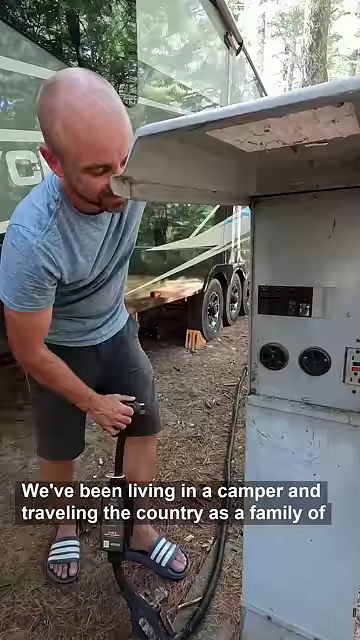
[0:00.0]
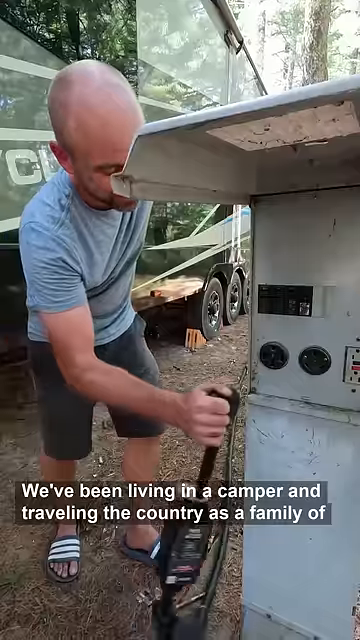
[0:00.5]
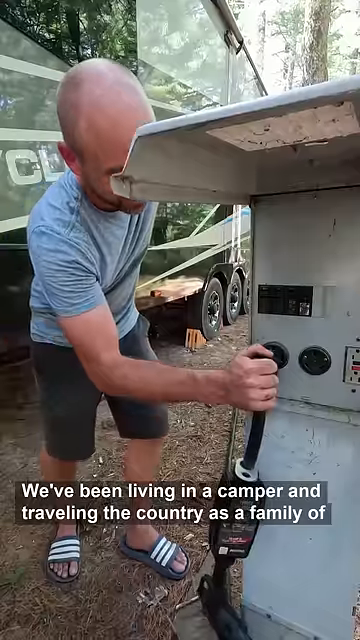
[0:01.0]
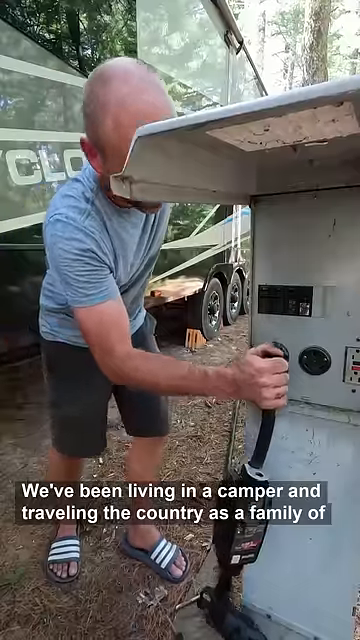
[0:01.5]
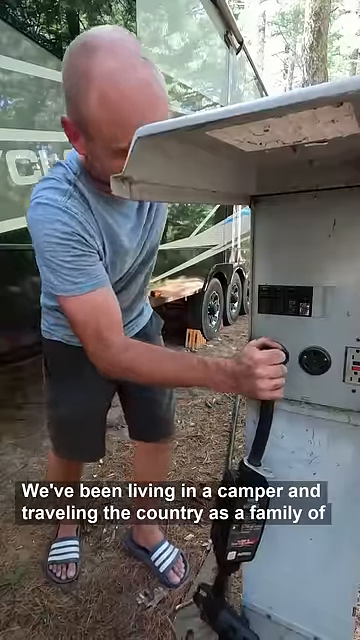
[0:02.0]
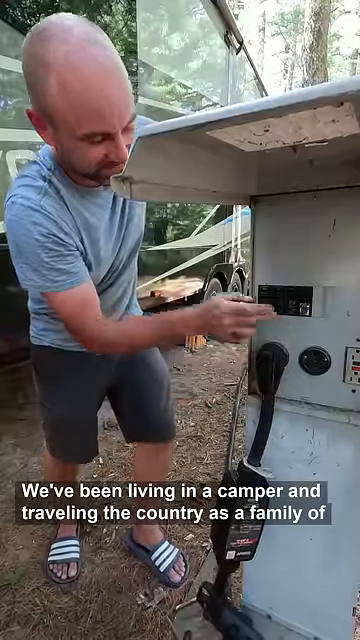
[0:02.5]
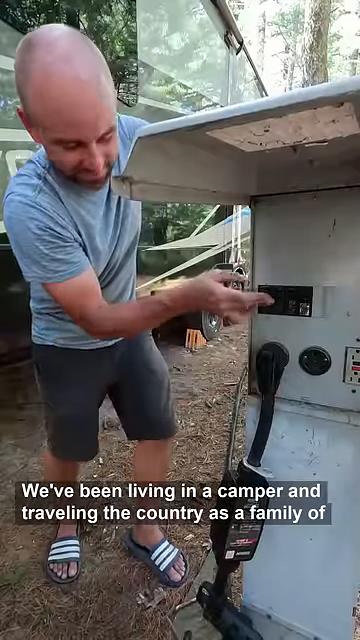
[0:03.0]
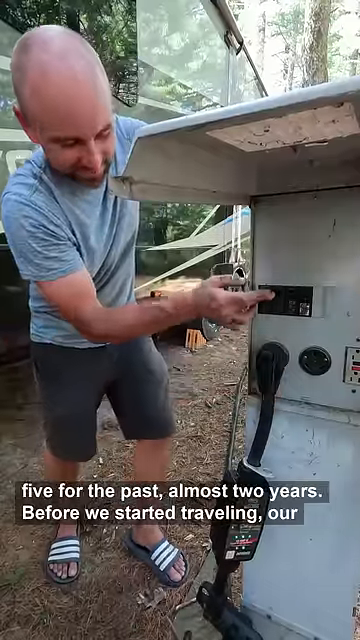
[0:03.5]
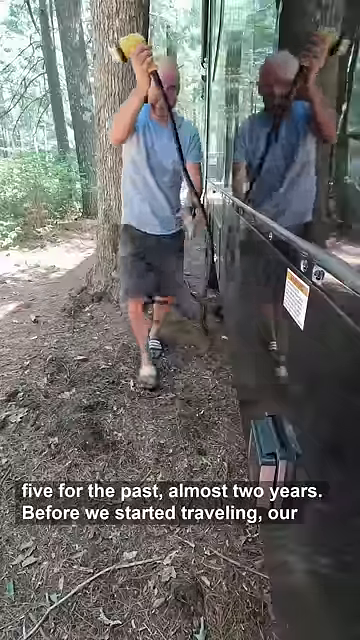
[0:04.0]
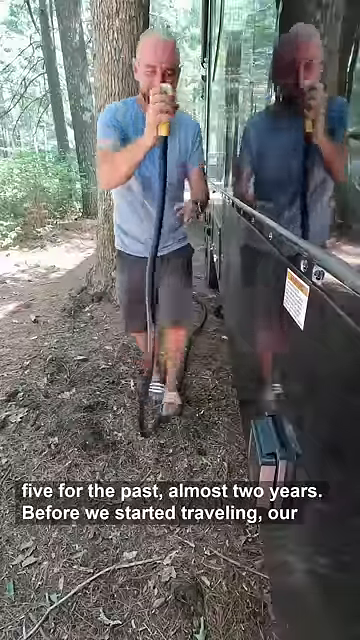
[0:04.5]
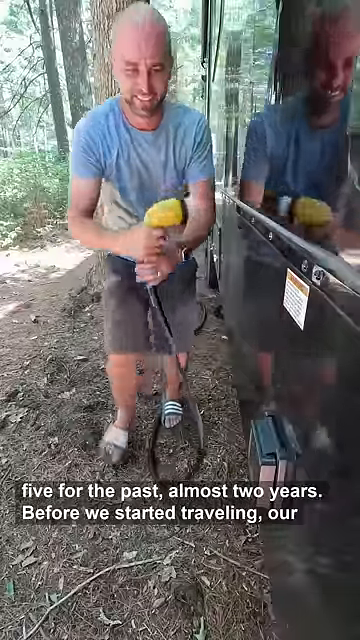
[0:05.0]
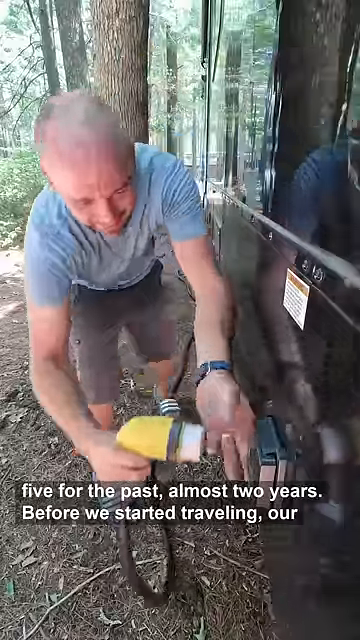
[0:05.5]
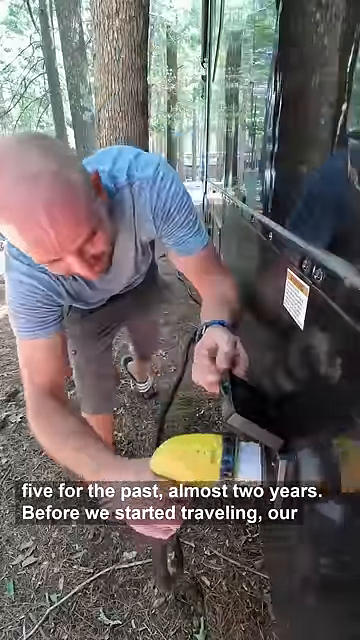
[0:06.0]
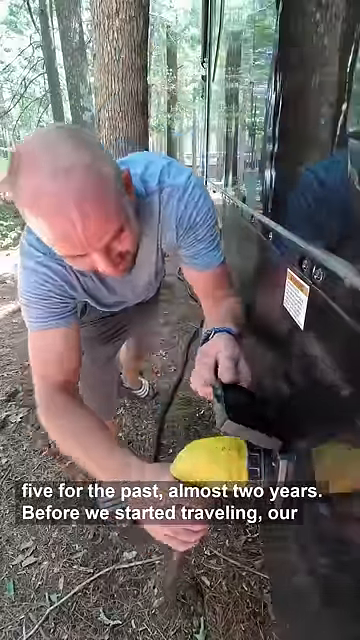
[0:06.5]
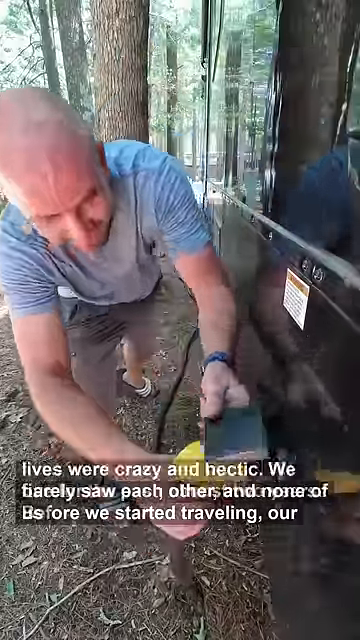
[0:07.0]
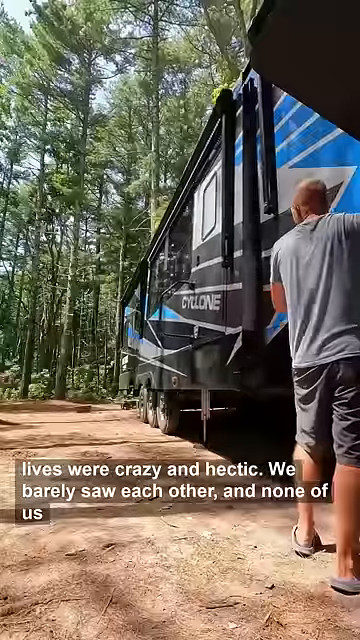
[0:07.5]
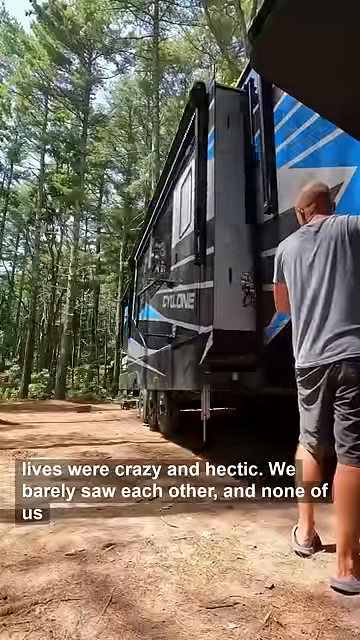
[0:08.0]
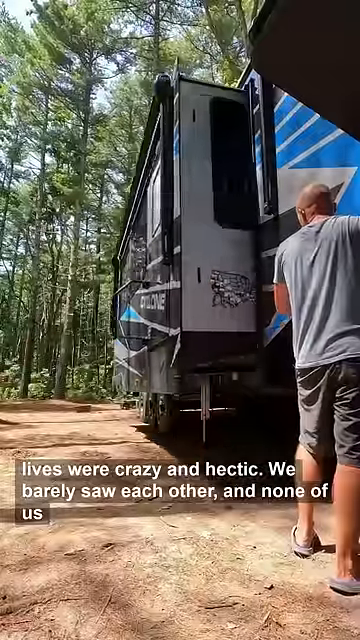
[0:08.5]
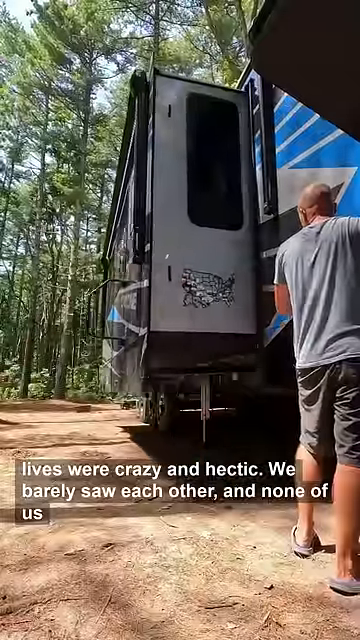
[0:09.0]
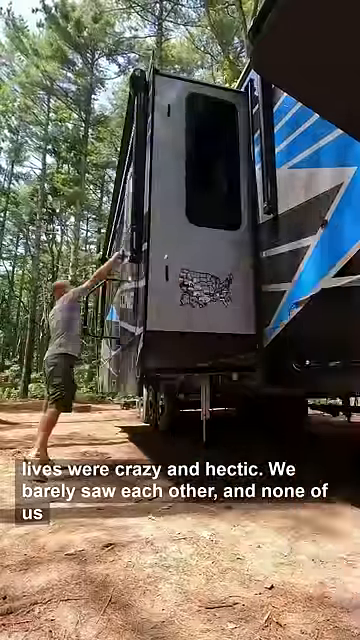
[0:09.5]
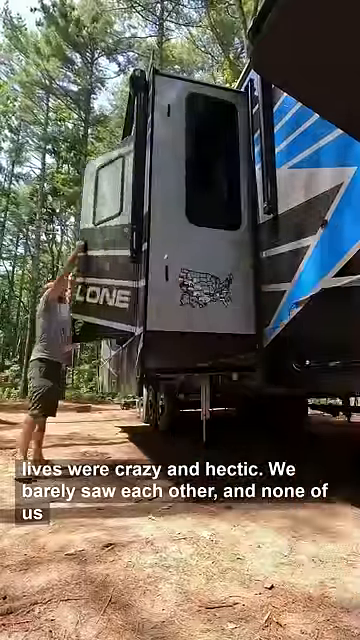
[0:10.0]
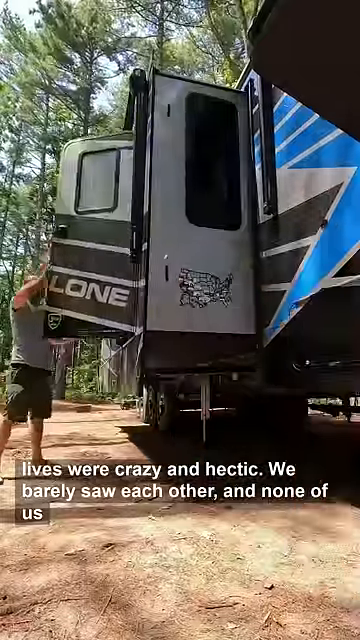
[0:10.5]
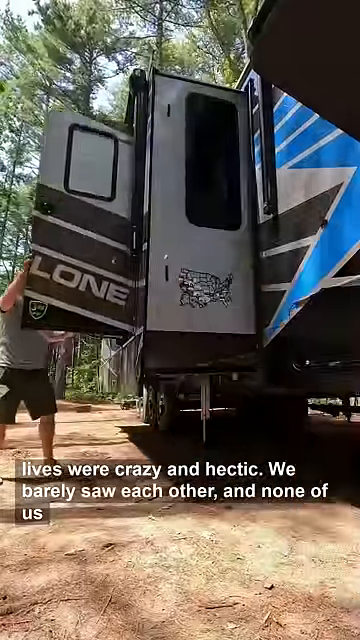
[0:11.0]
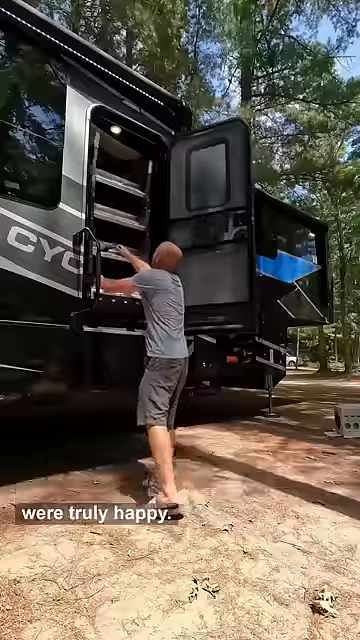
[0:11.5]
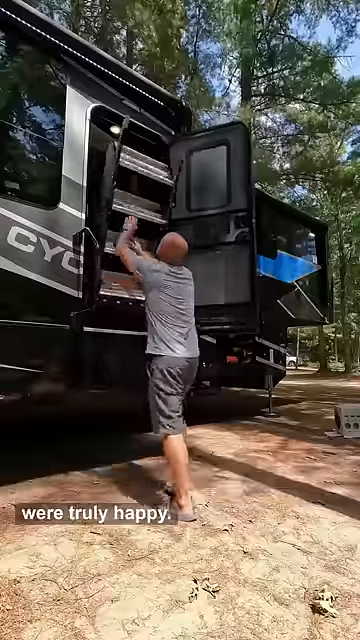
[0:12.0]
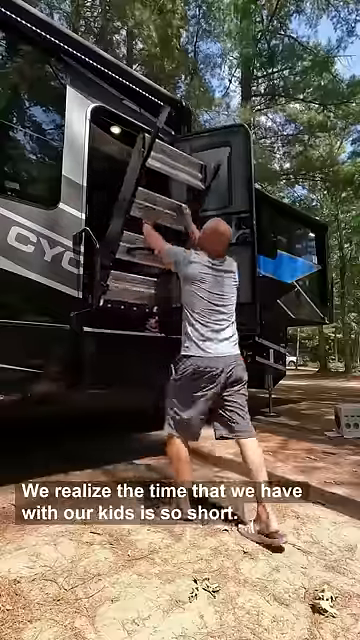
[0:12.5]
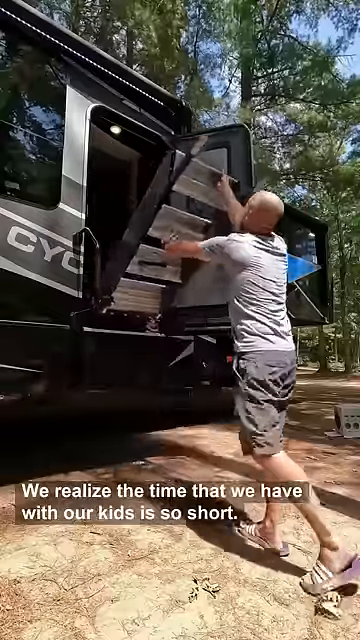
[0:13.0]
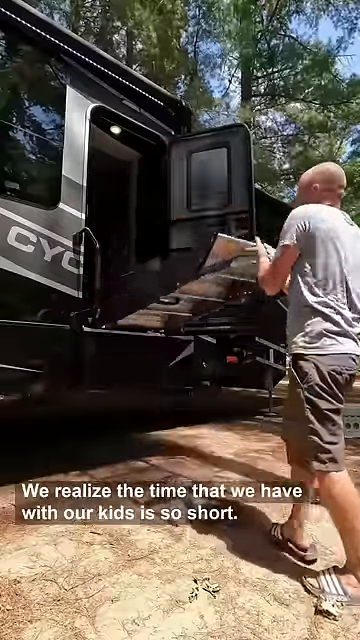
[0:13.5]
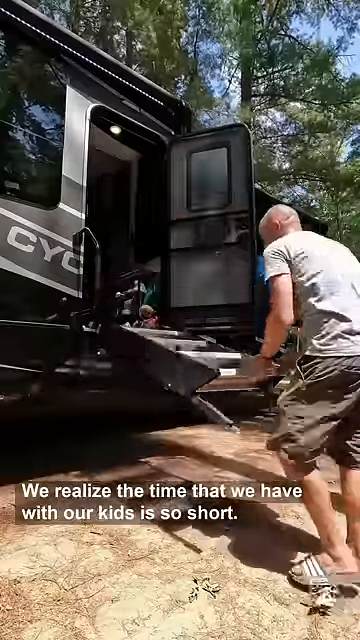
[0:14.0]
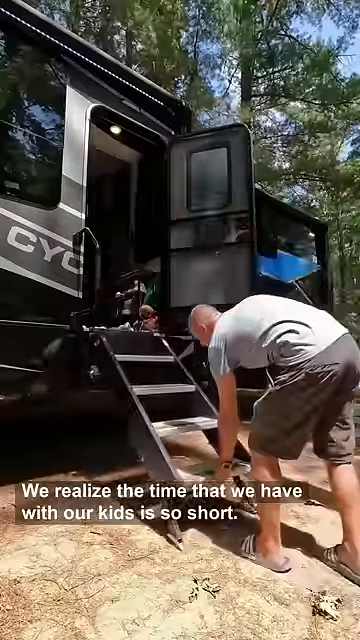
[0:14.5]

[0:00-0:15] On a sunny day, a young man is at what appears to be an RV park in a wooded area; the trees are not dense, but there are enough of them to call it woods. He plugs his camper into some sort of electrical power source and then into his RV, where he begins opening it up, letting its side open hydraulically. He stands on the side and uses a lever to extend the side out from the RV, and then he lets the steps of the RV down. He is balding, in his 30s, of European descent, and wears shorts, a t-shirt and sandals.